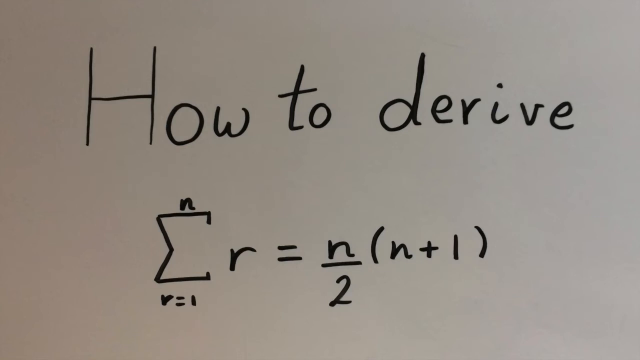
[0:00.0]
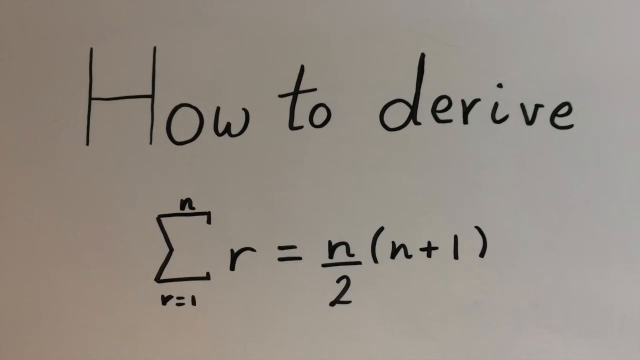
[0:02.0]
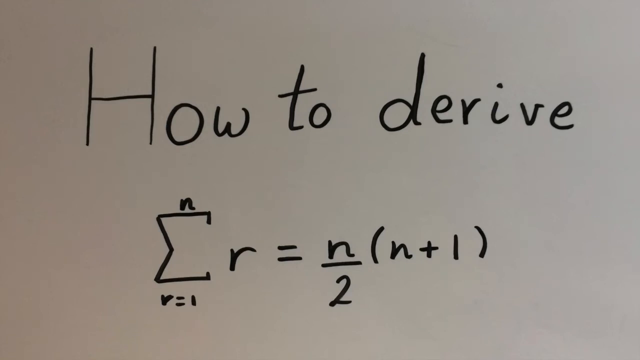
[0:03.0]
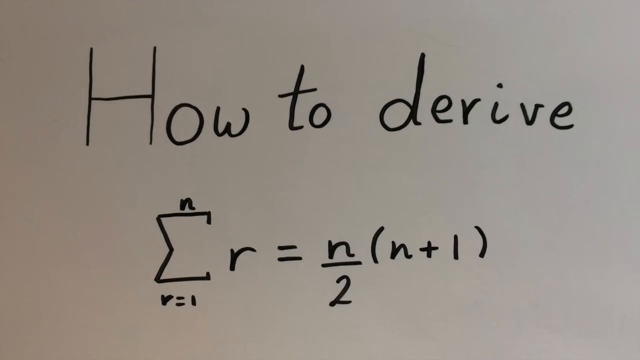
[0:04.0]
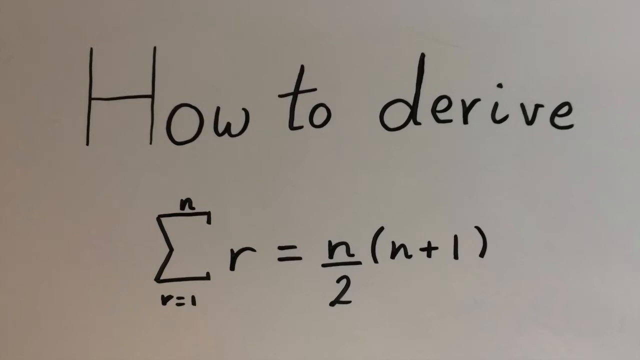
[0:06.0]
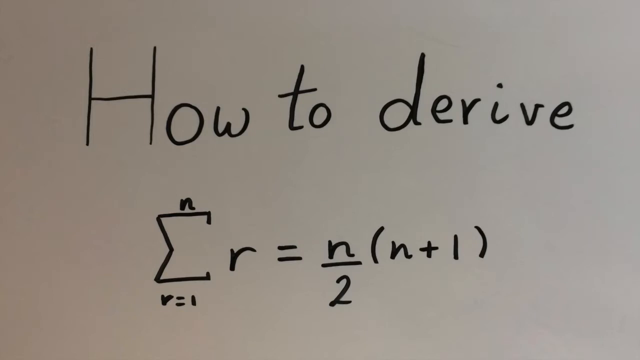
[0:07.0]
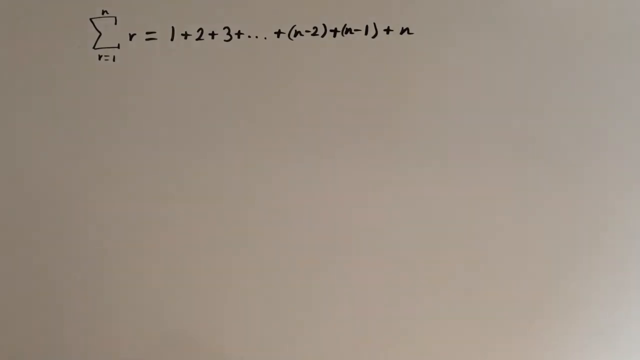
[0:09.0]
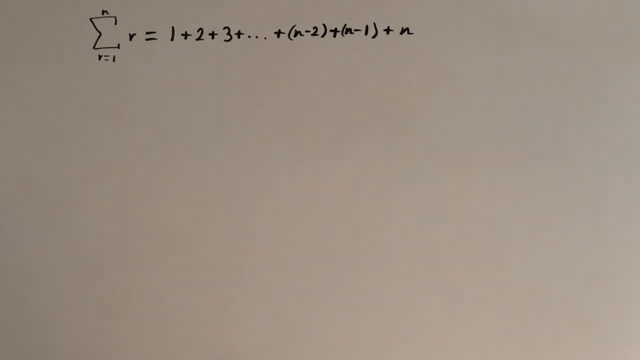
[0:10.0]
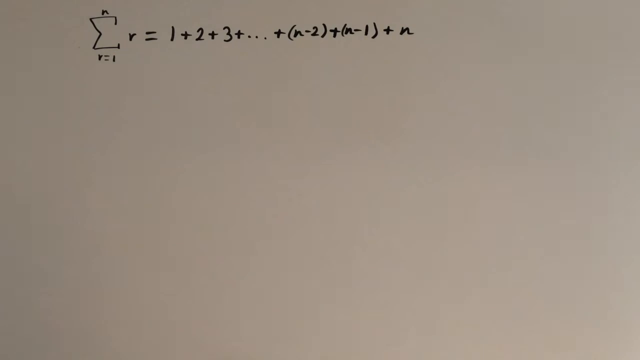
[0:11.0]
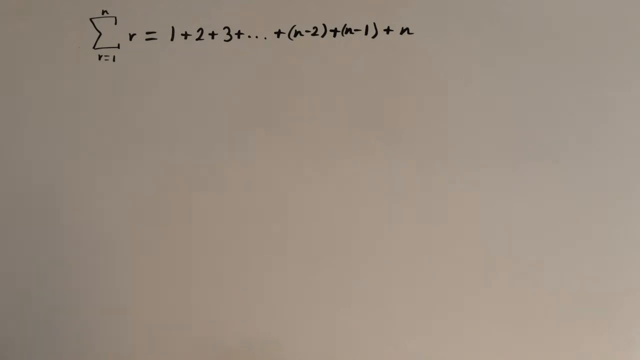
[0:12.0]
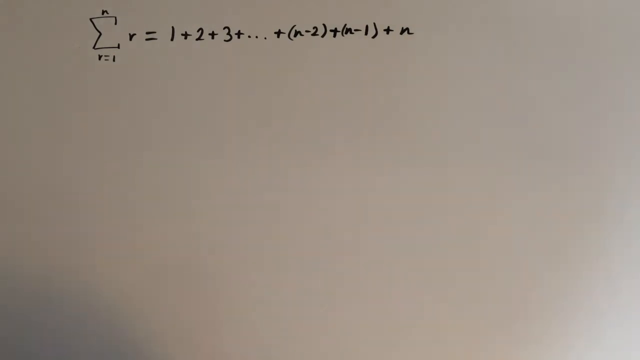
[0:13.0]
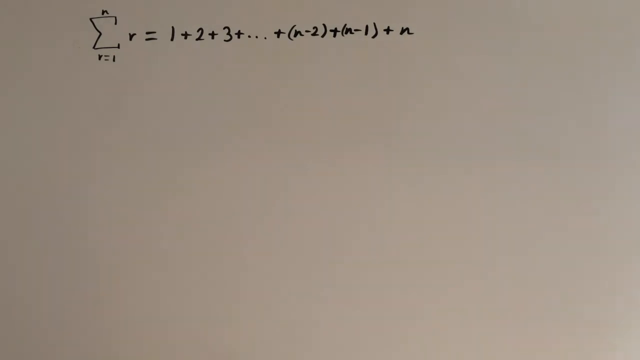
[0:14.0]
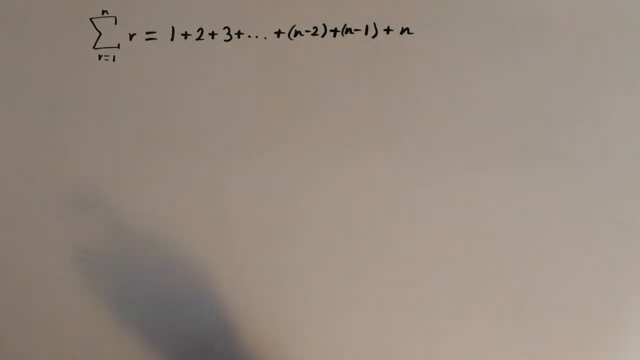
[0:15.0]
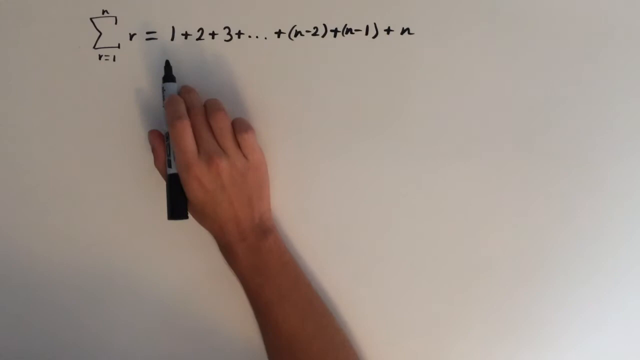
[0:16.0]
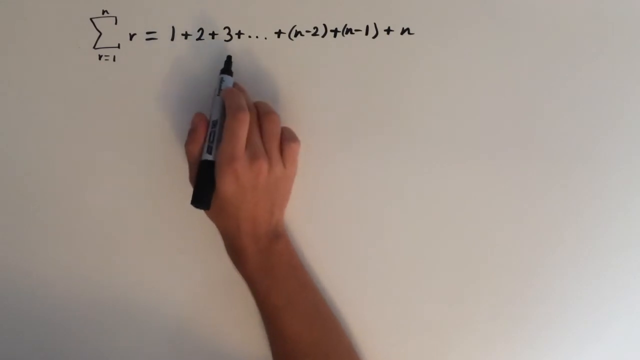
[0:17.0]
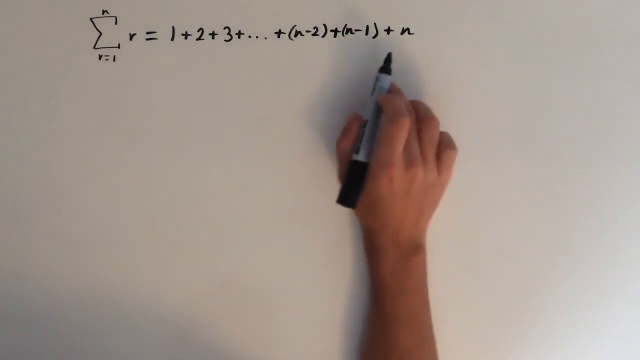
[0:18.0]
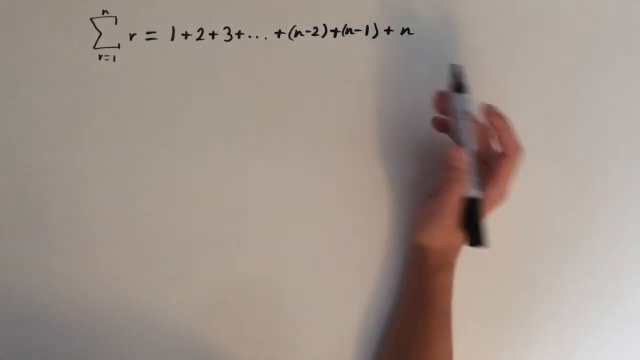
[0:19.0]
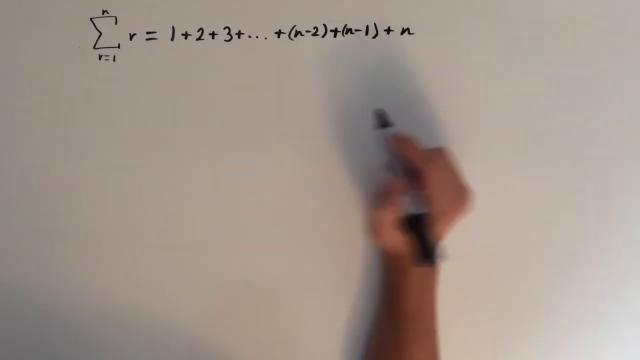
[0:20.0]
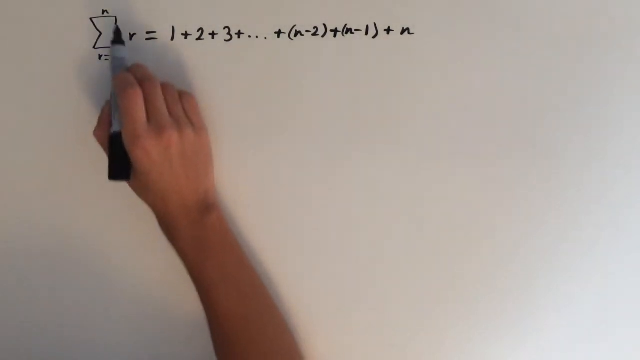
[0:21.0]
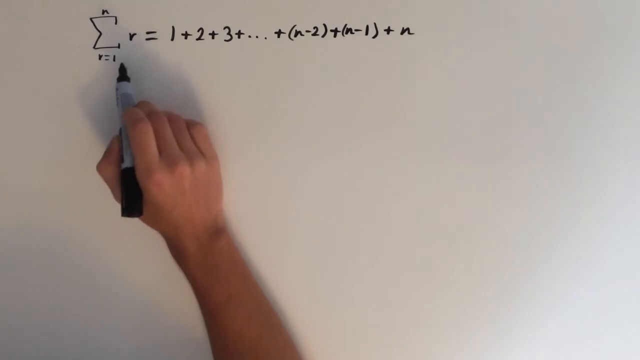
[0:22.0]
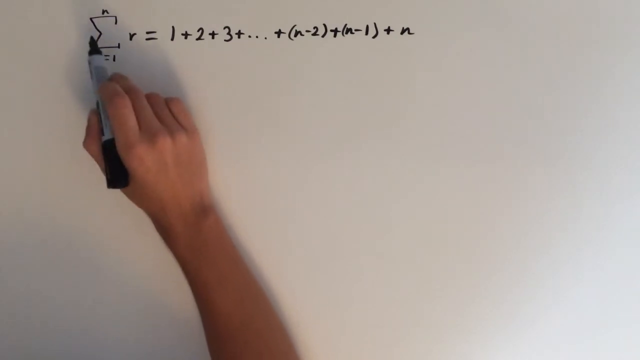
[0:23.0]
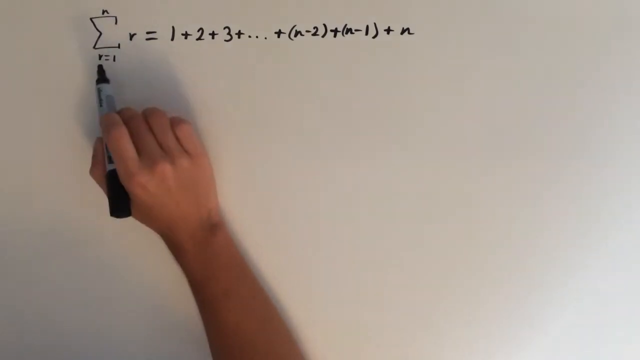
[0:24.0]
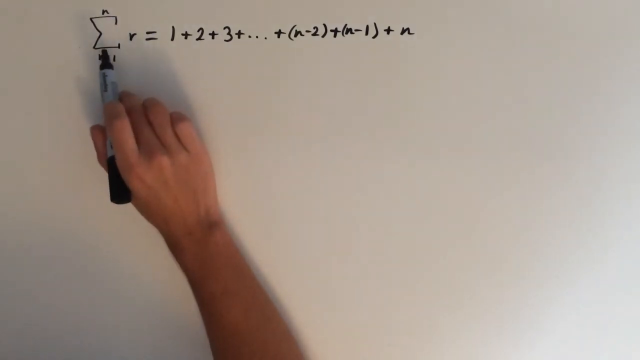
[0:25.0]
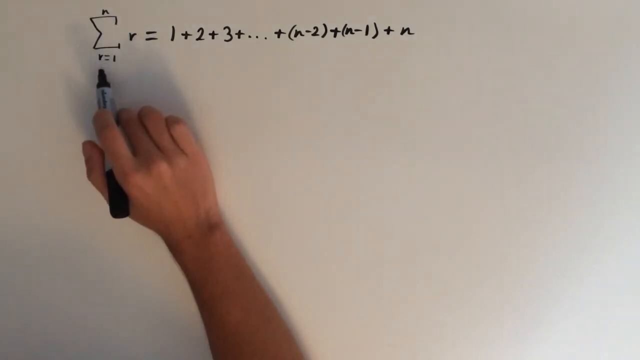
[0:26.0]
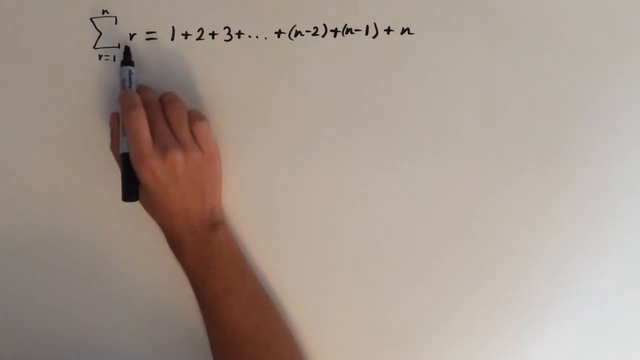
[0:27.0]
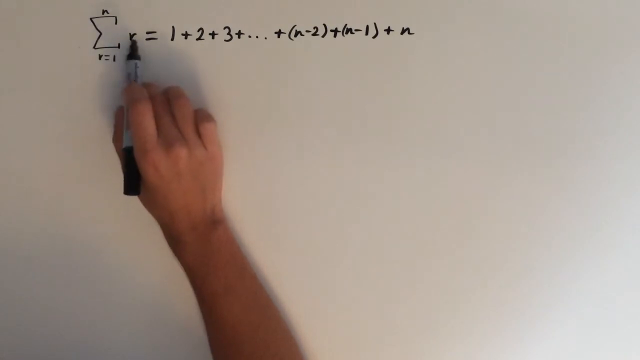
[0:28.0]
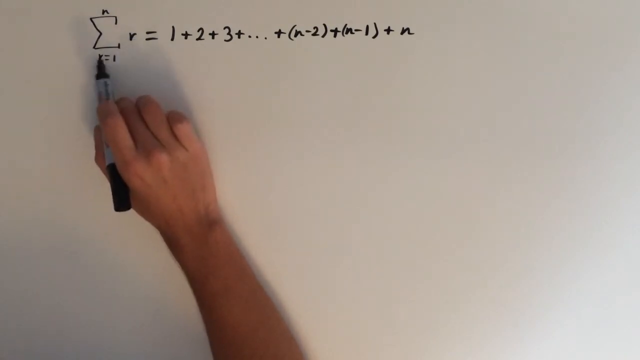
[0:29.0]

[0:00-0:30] The video is about deriving the sum of r from r = 1 to n, and the thumbnail shows that the sum of r, for r equals 1 to n, equals n over 2 times (n + 1). The derivation takes place on a whiteboard, written in black marker. The board shows the sum of r, for i = 1 to n, written as 1 + 2 + 3 + … + (n − 2) + (n − 1) + n. The host has a white arm and hand and holds a marker, hovering it over different parts of the expression such as the r and the n, apparently explaining what each one does.